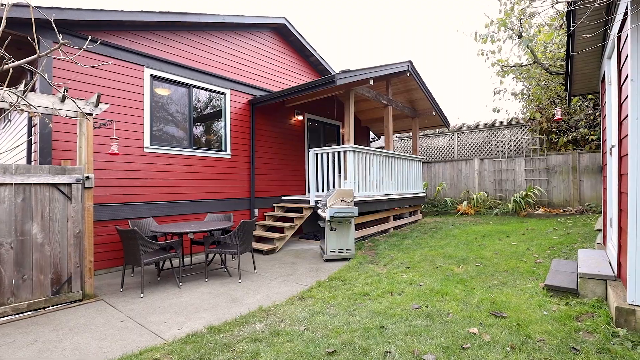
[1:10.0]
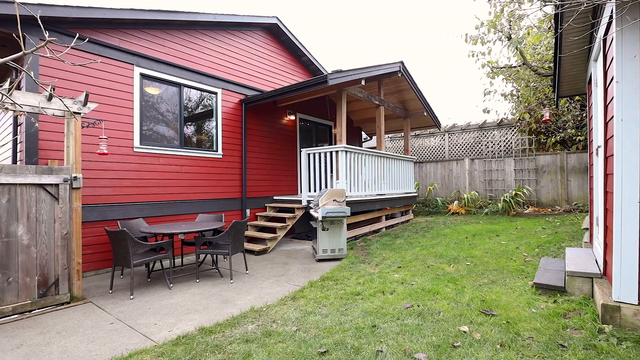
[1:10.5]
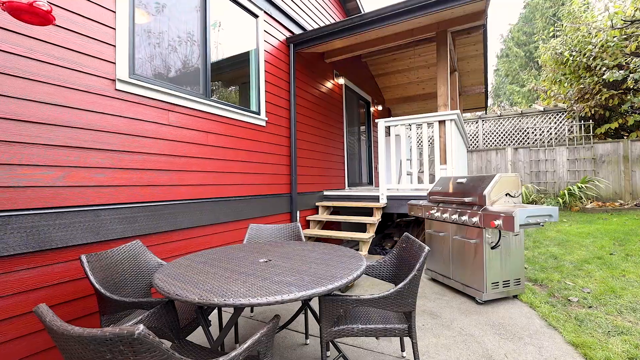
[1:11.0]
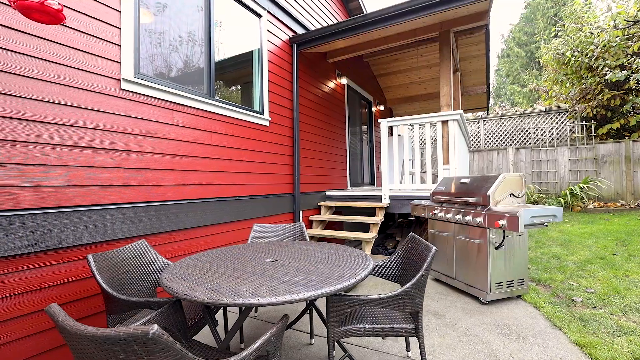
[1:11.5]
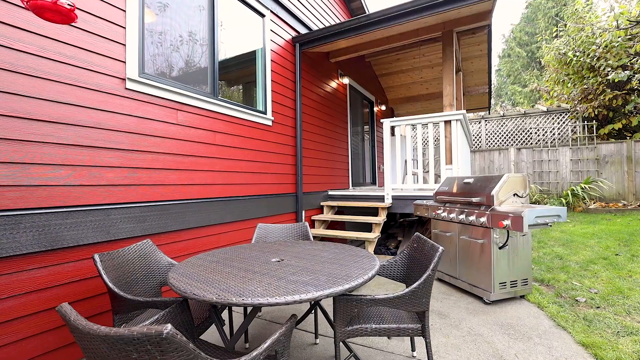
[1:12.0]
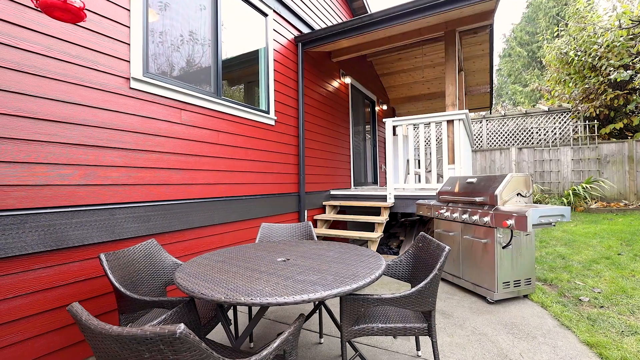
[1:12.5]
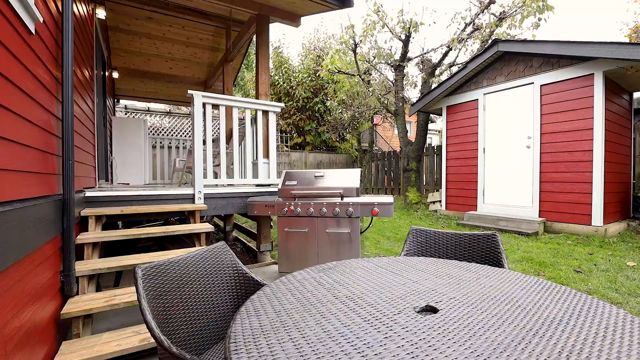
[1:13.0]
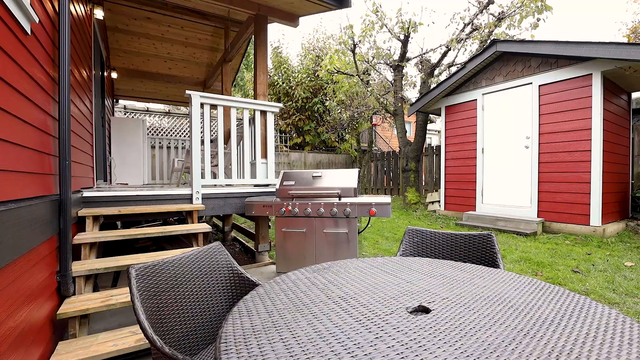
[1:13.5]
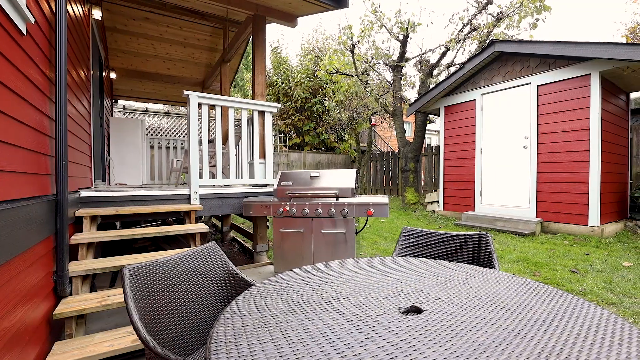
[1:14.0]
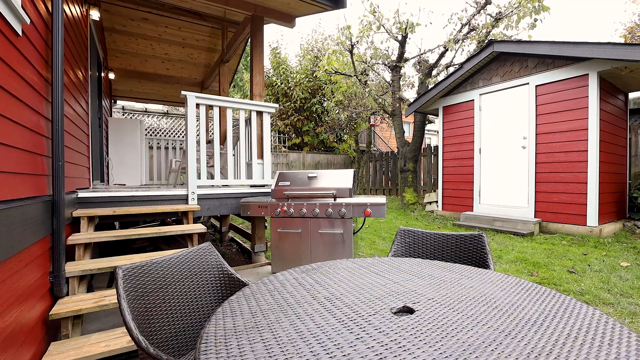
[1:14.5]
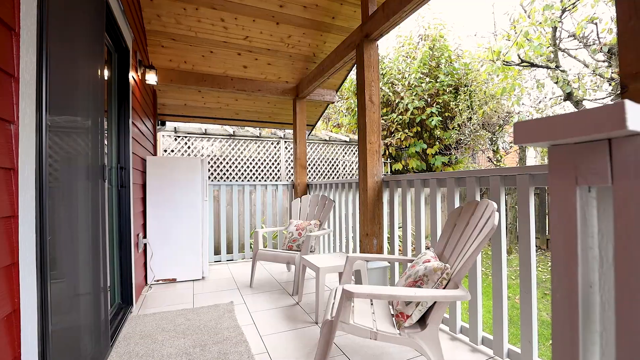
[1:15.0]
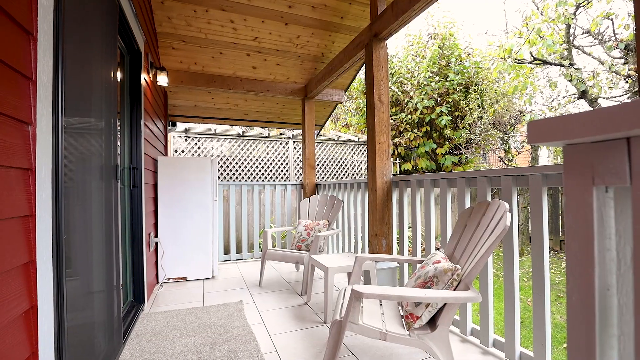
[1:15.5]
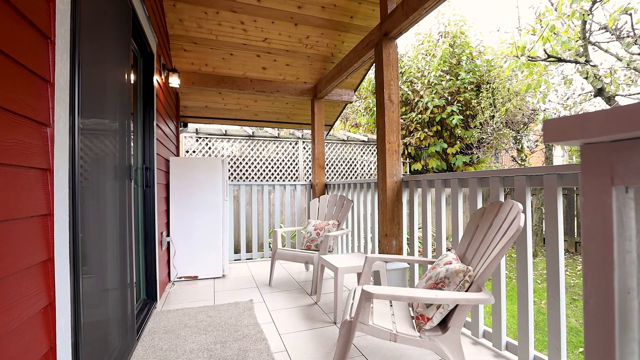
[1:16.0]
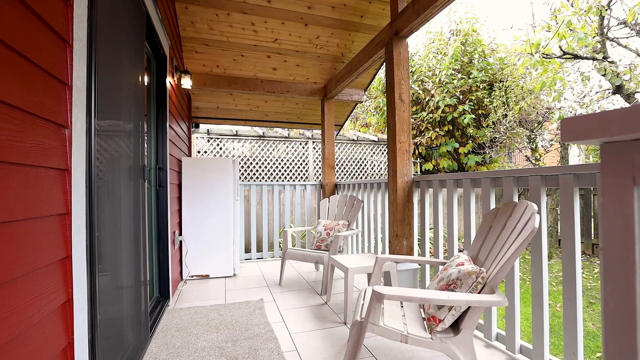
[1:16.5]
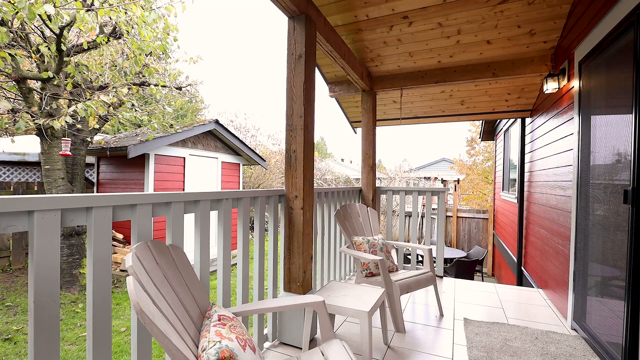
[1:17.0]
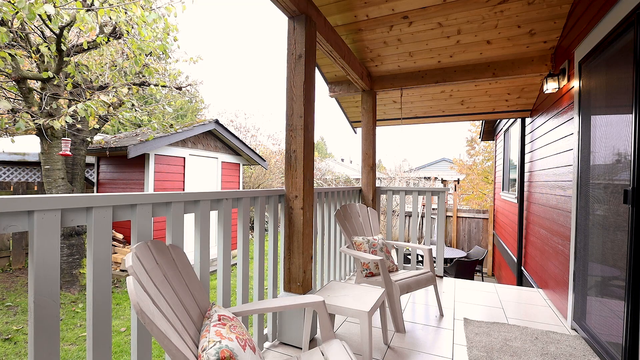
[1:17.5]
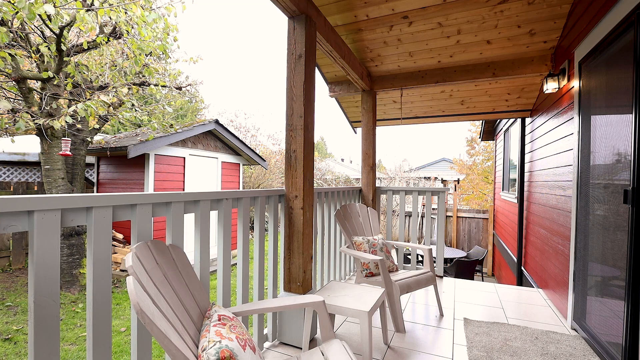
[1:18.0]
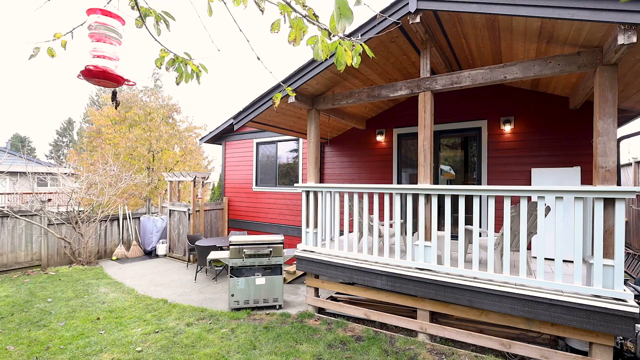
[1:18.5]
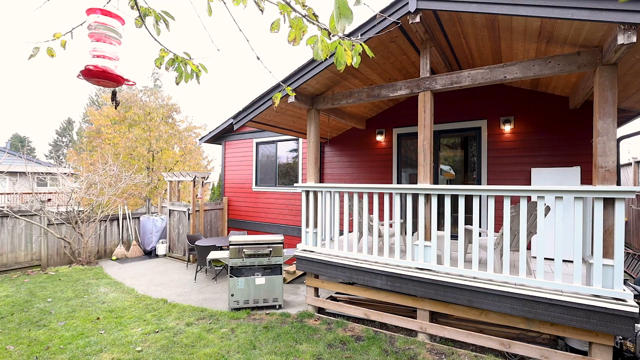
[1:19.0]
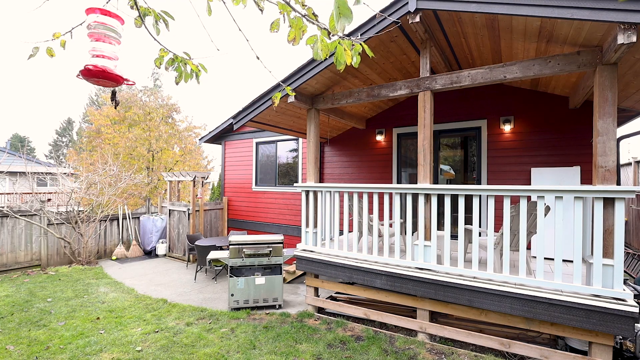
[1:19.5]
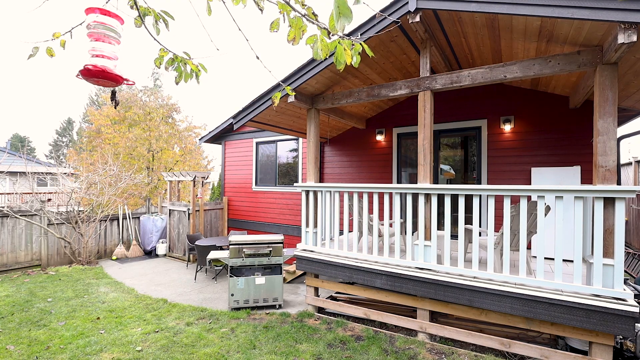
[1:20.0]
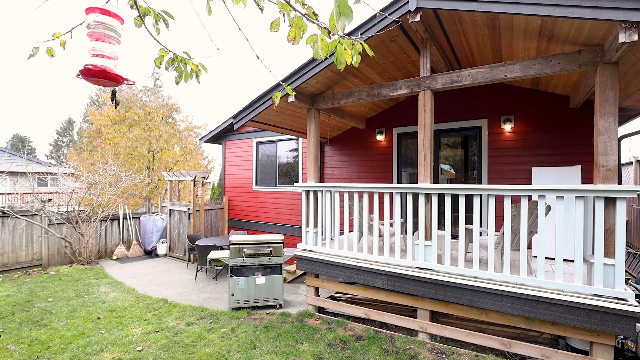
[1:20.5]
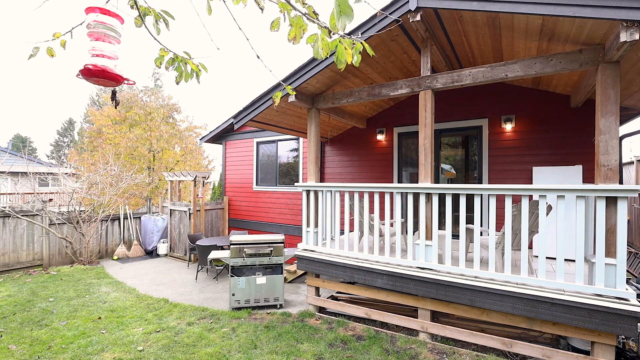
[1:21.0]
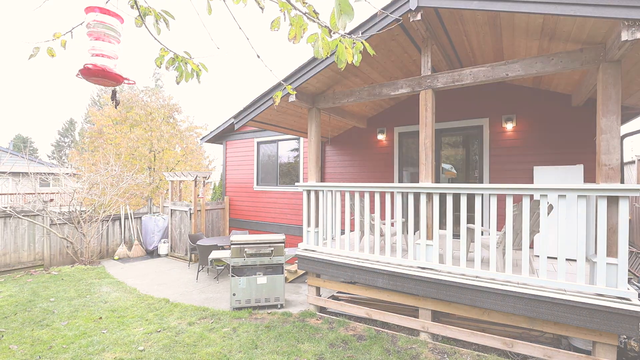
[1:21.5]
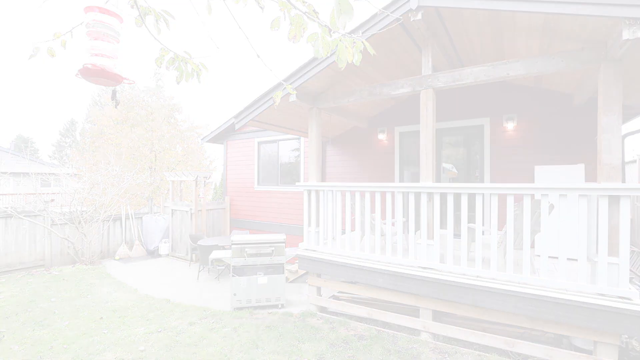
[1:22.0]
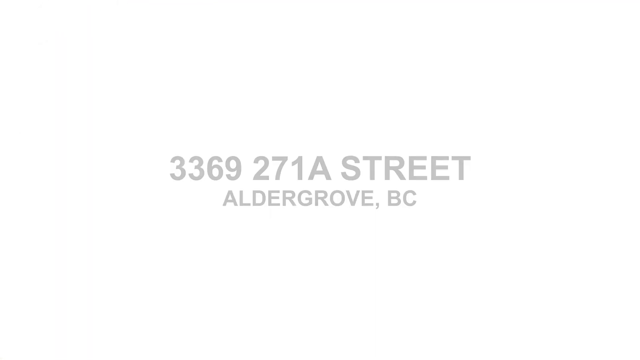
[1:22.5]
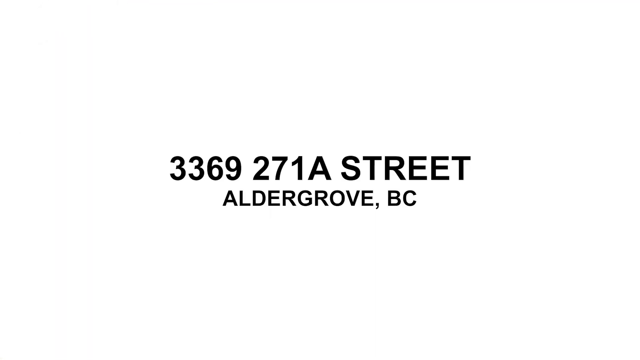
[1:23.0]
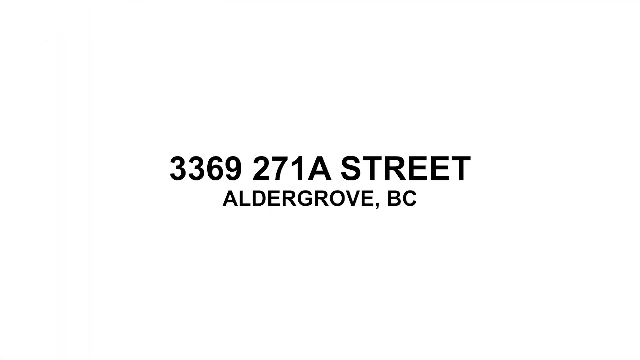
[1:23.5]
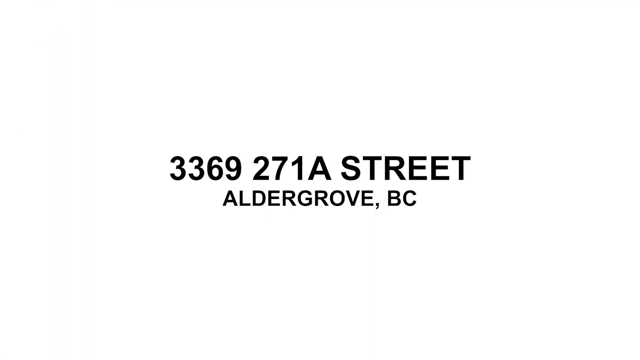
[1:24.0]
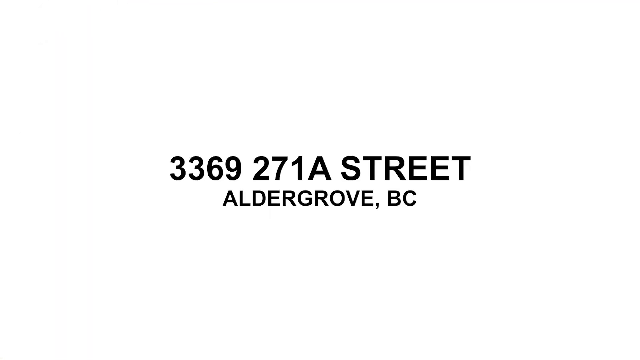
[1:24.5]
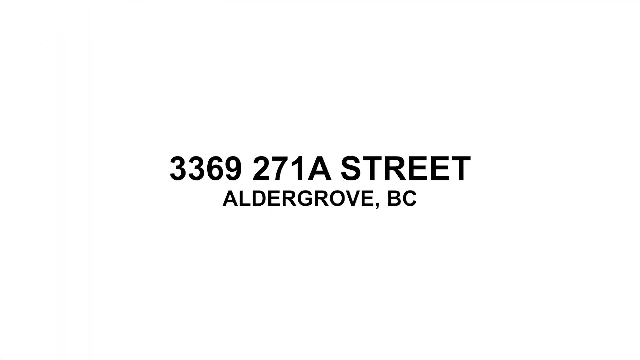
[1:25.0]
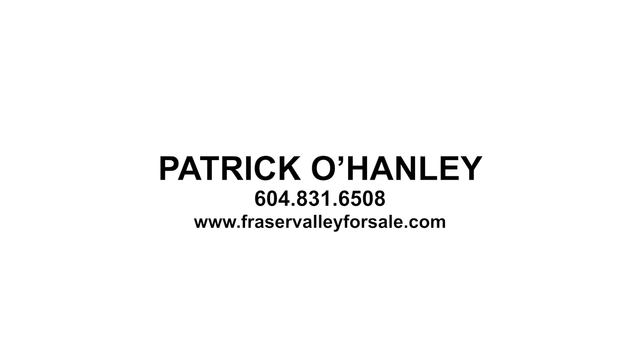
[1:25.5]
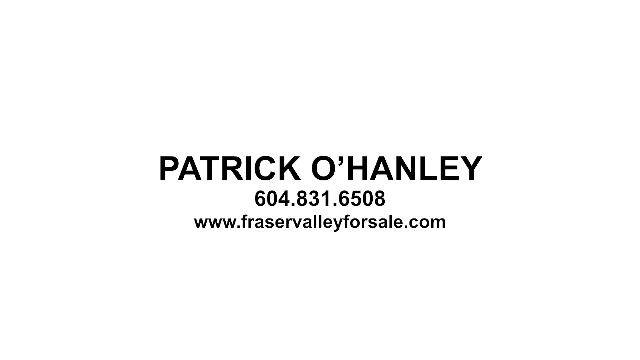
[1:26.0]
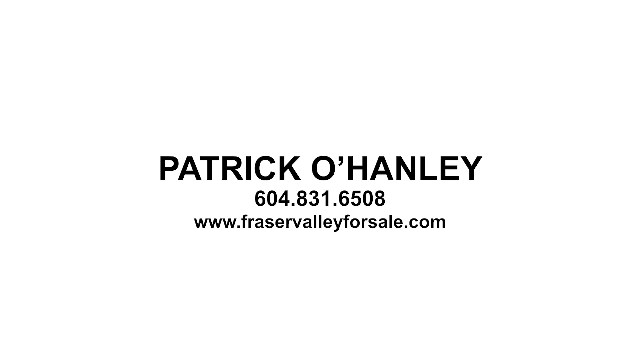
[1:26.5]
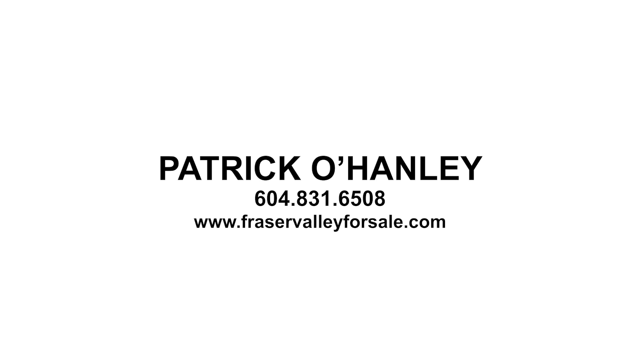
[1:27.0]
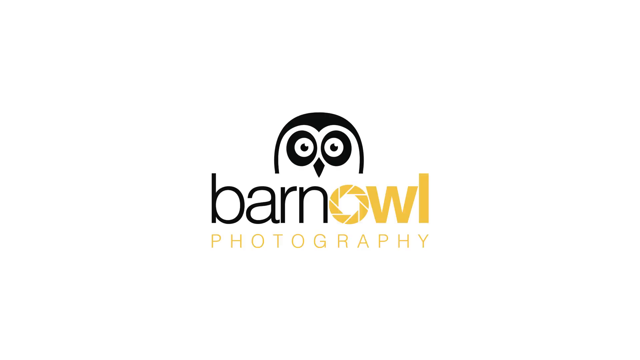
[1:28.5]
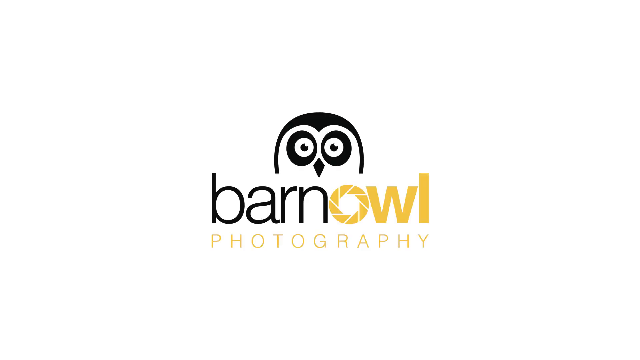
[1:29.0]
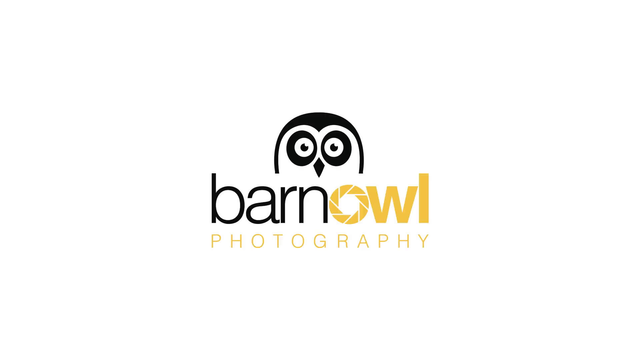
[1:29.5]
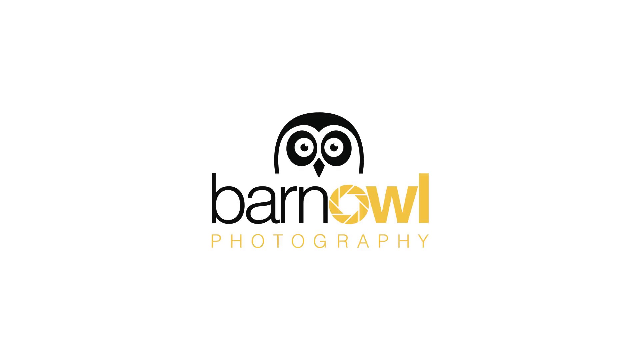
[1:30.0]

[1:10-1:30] The back side of the home is shown, with red siding, and a detached shed that matches the same style. In the backyard there is a covered porch with a white railing, a barbecue grill on a patio, an older wooden fence in the background, and green grass. A red bird feeder hangs from some tree branches in the foreground. A couple of white Adirondack chairs are on the porch, which is raised a little. The view then moves down to a flat area with a barbecue and a table, with wood stairs going down to it. The shed has a white door. The video then switches to a graphic with the realtor's contact information: the address of the home in black text over white, and, in the same all-caps font, the name Patrick O'Hanley, his telephone number, and his website.